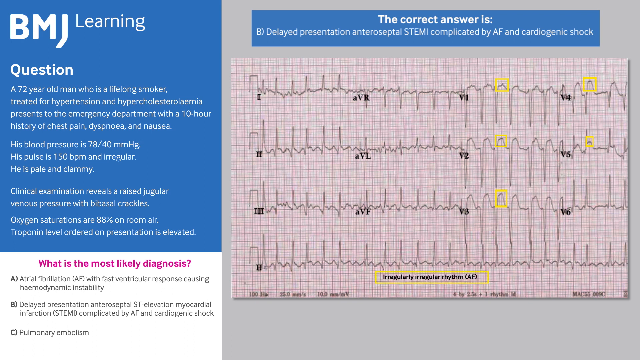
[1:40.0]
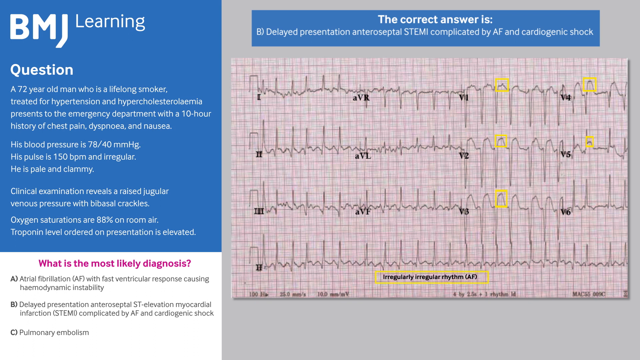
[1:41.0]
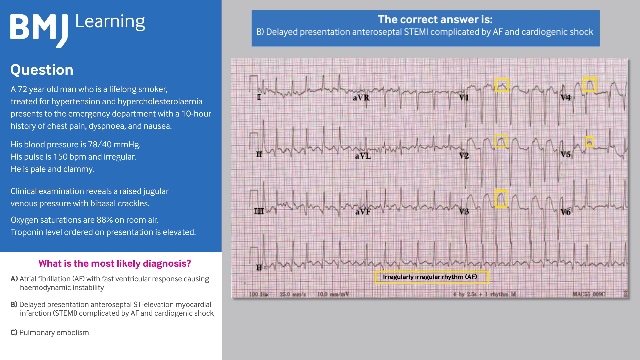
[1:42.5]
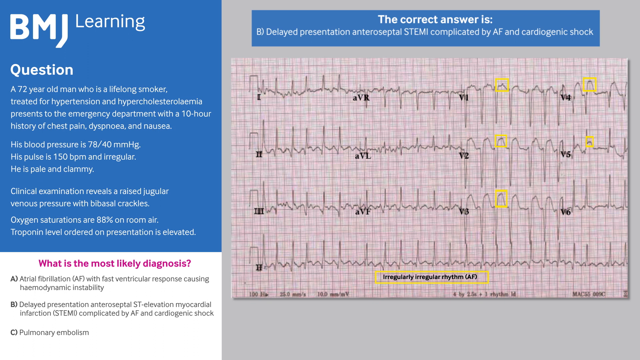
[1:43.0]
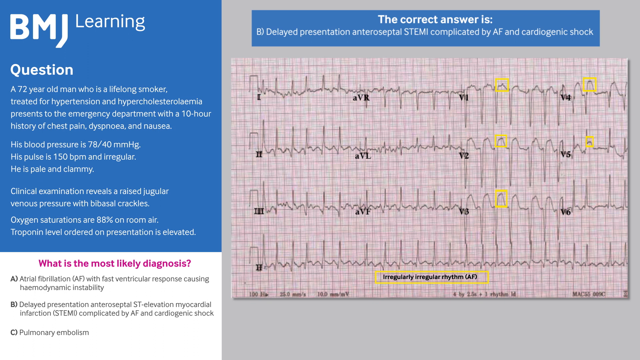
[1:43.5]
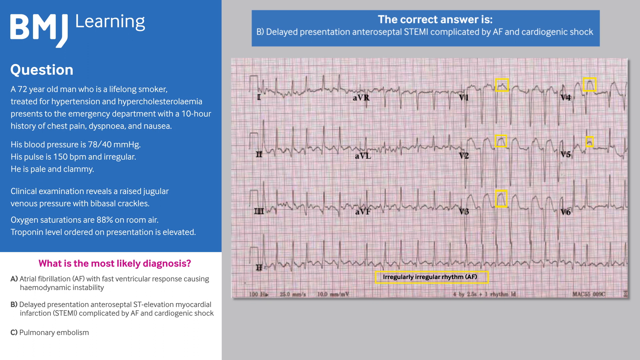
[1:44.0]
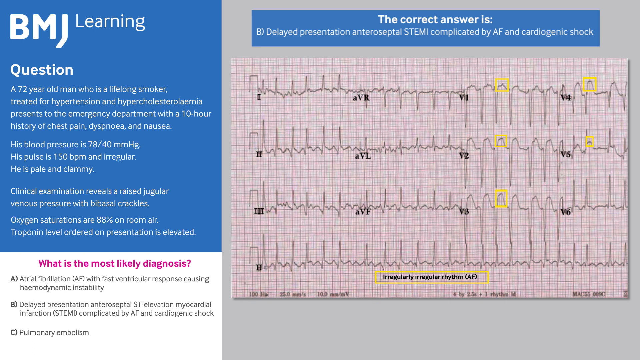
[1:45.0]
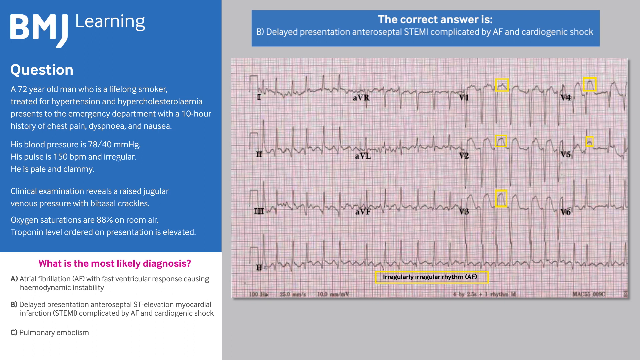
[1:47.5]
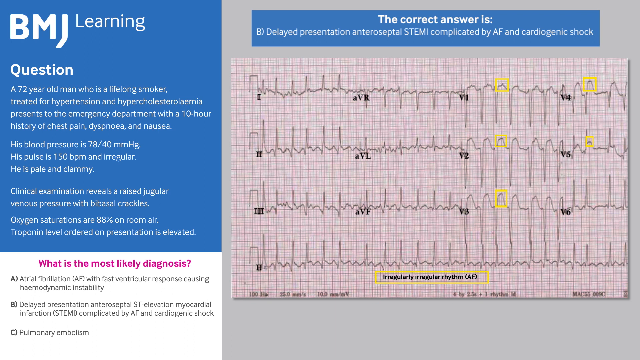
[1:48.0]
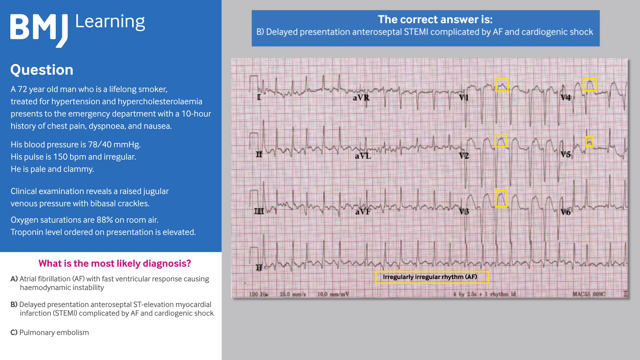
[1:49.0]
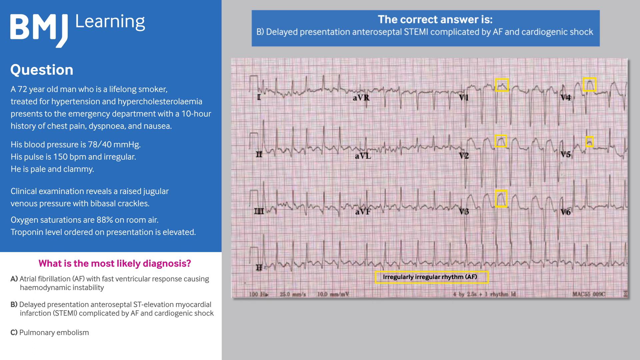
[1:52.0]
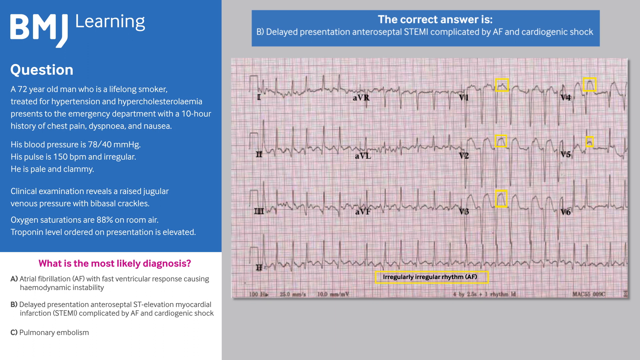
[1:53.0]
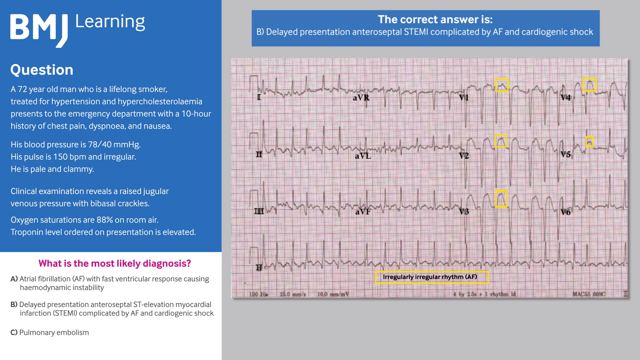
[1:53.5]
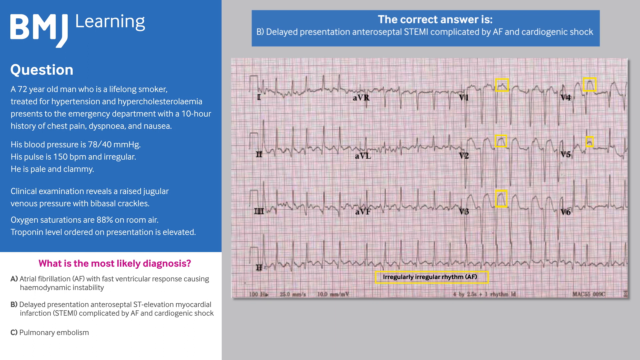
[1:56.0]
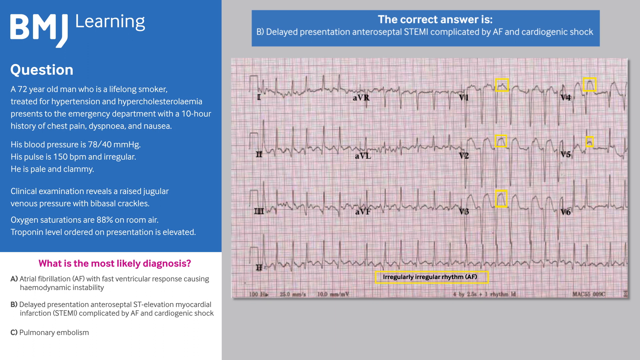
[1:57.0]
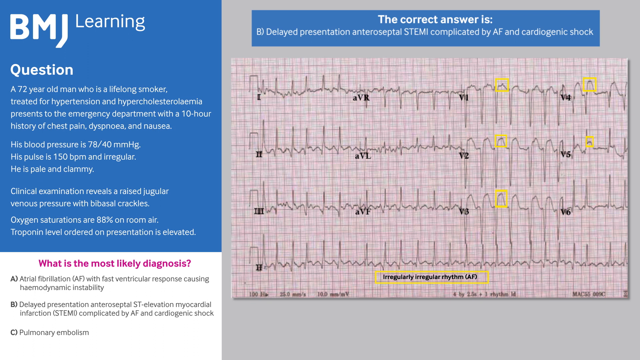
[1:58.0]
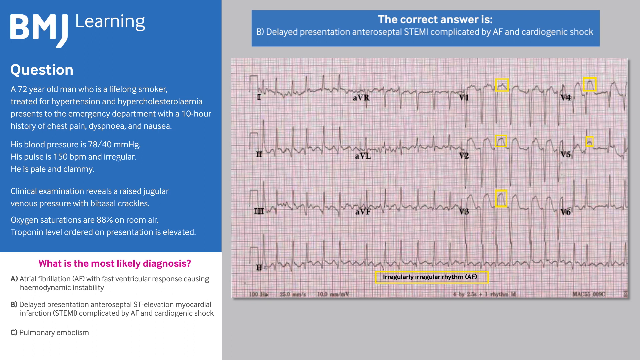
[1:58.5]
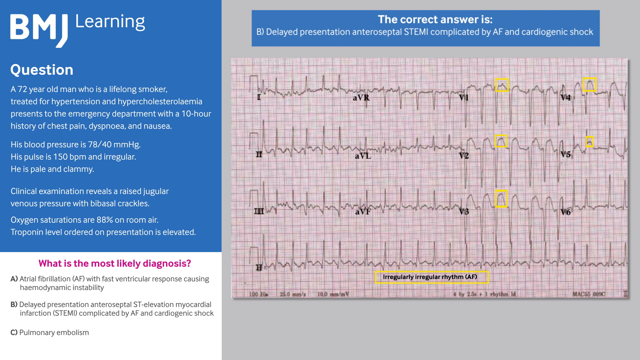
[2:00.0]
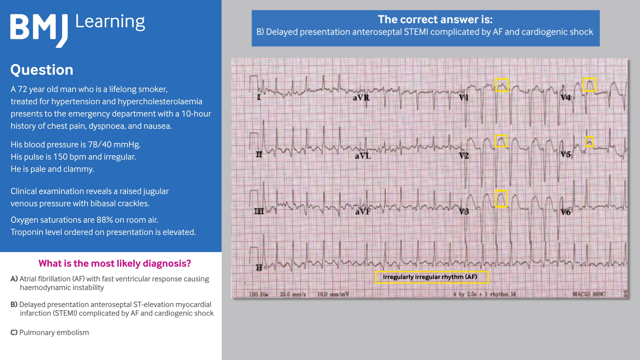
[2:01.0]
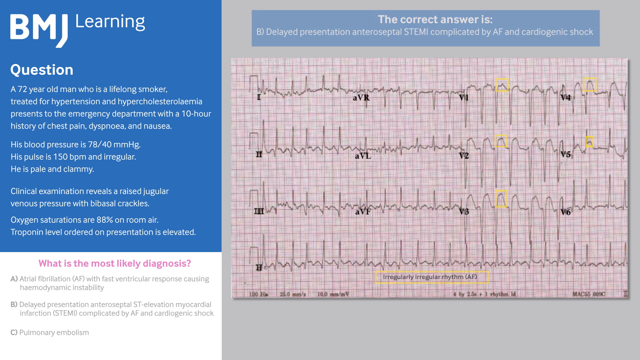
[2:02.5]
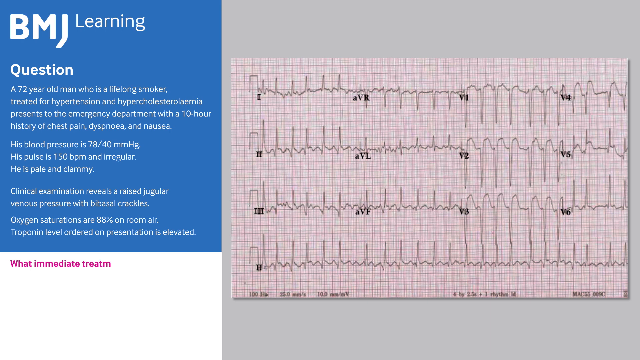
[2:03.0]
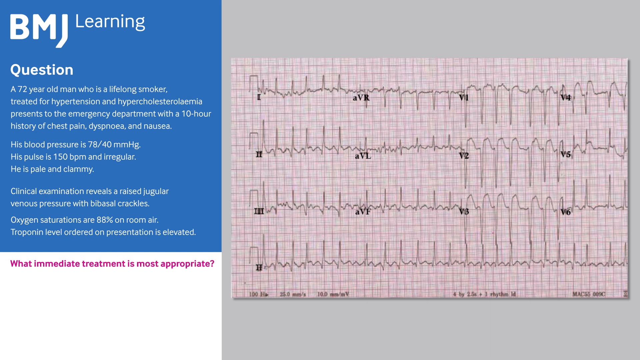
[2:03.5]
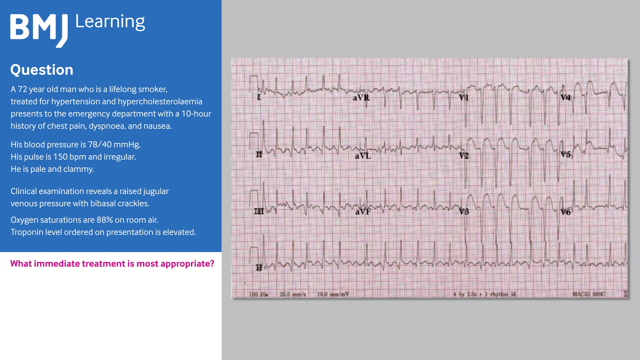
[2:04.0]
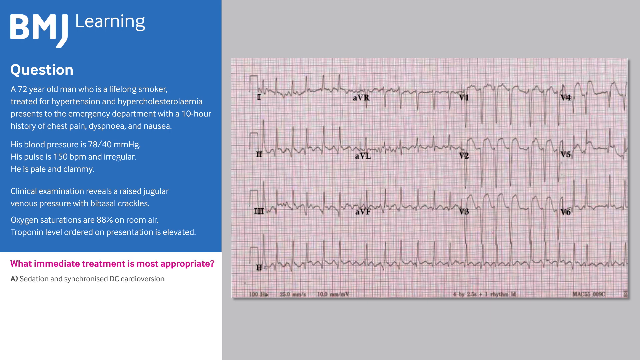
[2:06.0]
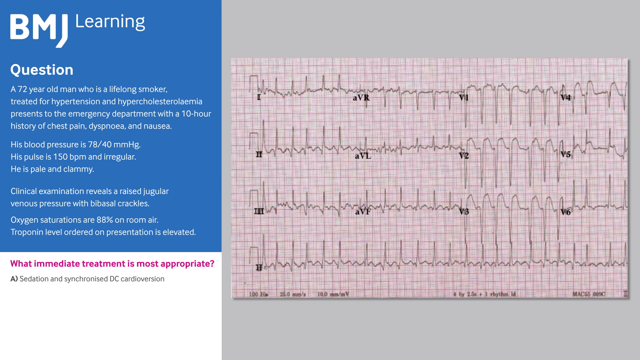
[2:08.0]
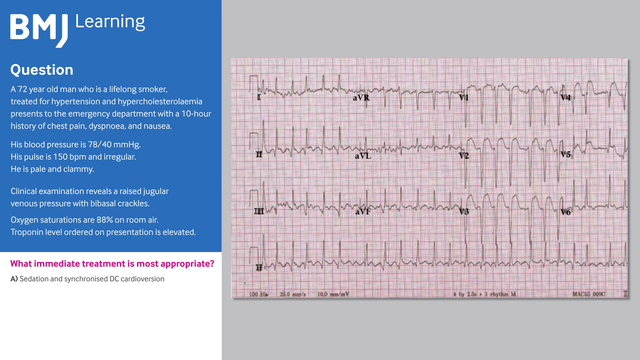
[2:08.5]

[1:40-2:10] The blue box takes up one quarter of the screen, ending three quarters of the way down, with white writing; a white box with purple and black writing fills the rest of that section. The other three quarters of the screen show the ECG graph with squiggly lines indicating the heart rate, labeled in black with the Roman numerals one through four, AVR, AVL, and V1 through V6. Yellow blocks now surround different points on the graph. At the top, the blue box's white writing says the correct answer is B, delayed presentation, complicated by AF and cardiogenic shock. "Irregular rhythm AF" appears in bold black font with a yellow box around it. Then "What immediate treatment is most appropriate" appears in purple in the white box, with multiple choice options in black underneath, starting with "A, sedation".